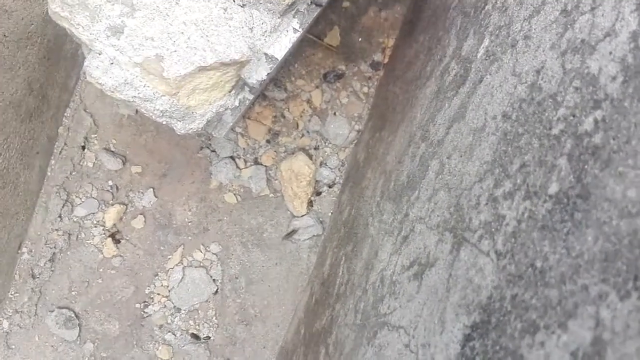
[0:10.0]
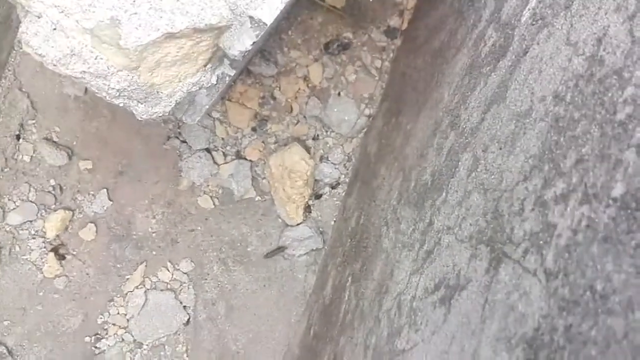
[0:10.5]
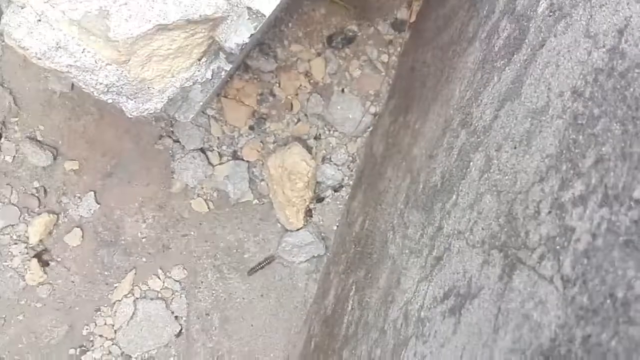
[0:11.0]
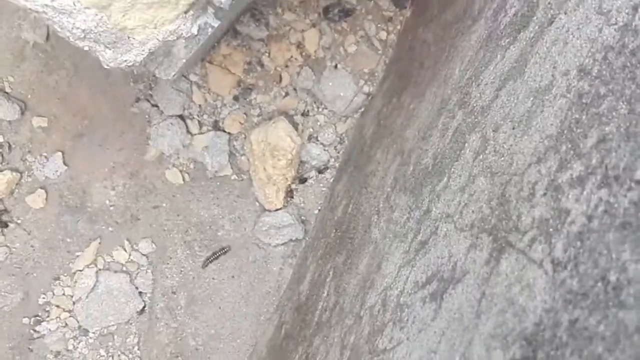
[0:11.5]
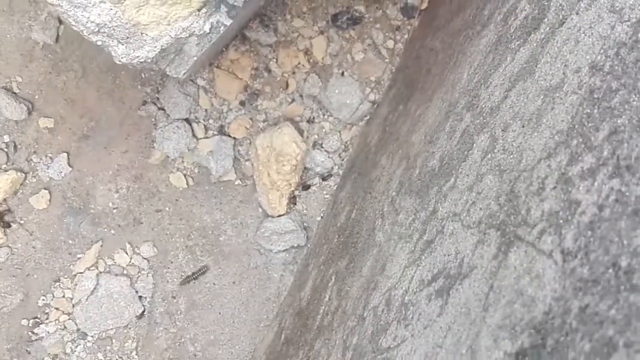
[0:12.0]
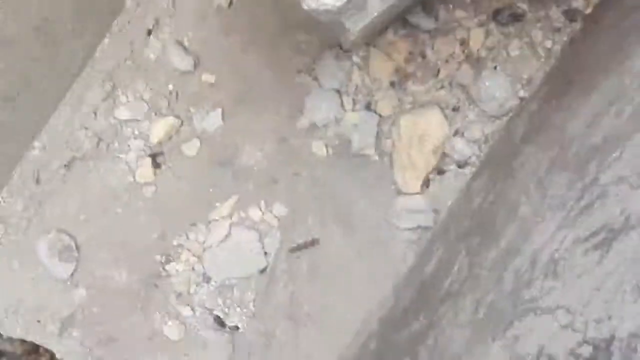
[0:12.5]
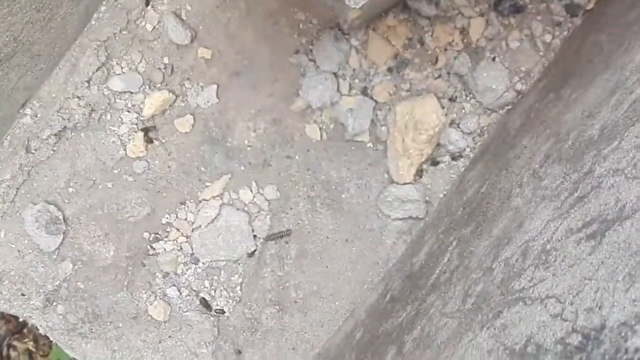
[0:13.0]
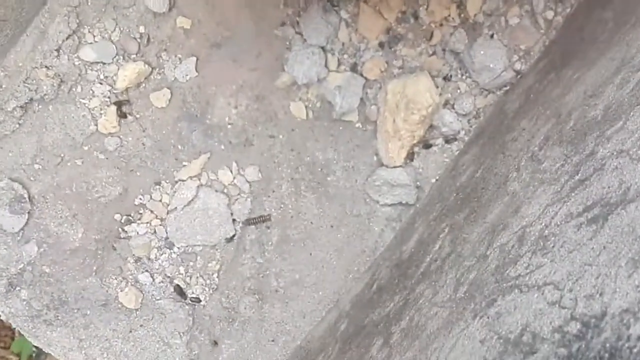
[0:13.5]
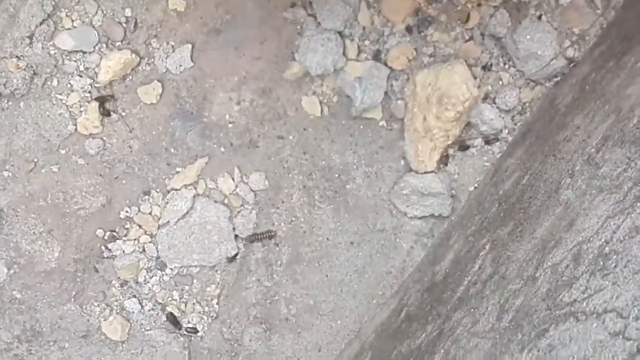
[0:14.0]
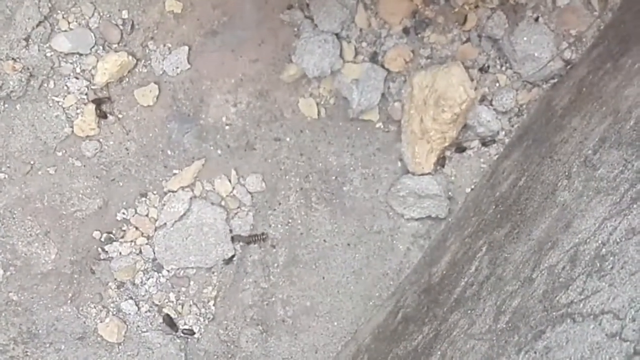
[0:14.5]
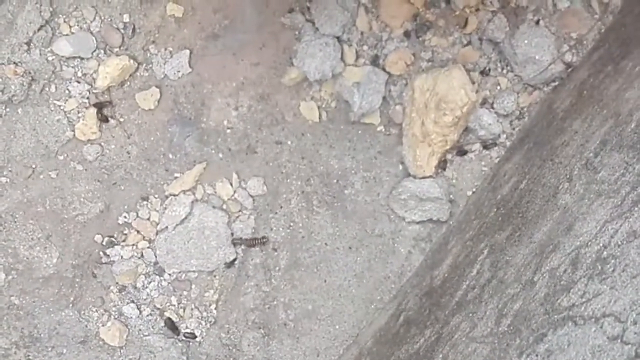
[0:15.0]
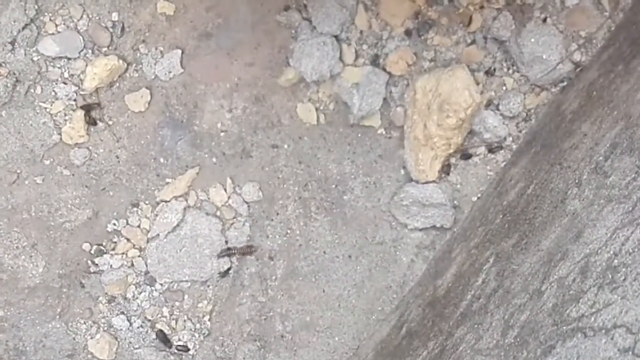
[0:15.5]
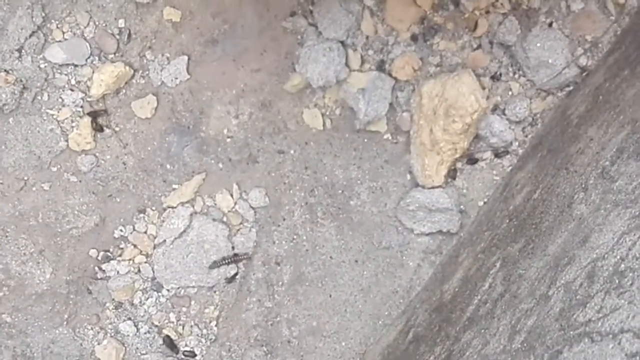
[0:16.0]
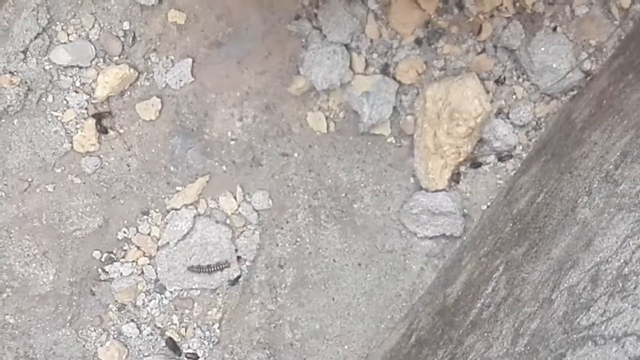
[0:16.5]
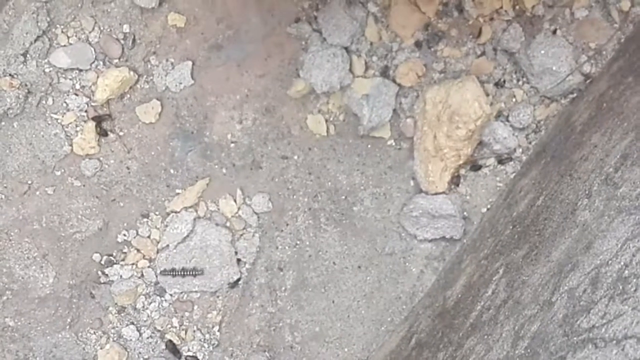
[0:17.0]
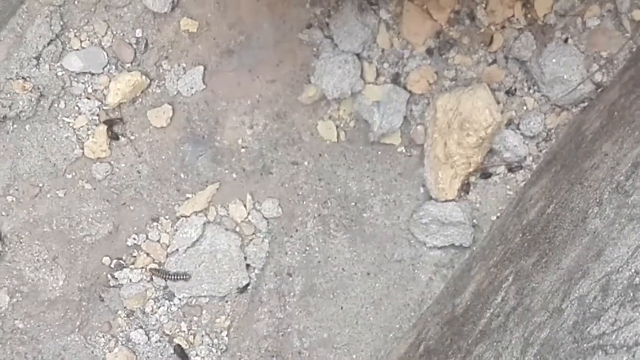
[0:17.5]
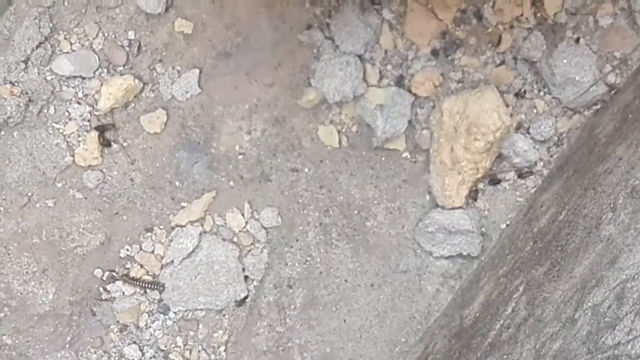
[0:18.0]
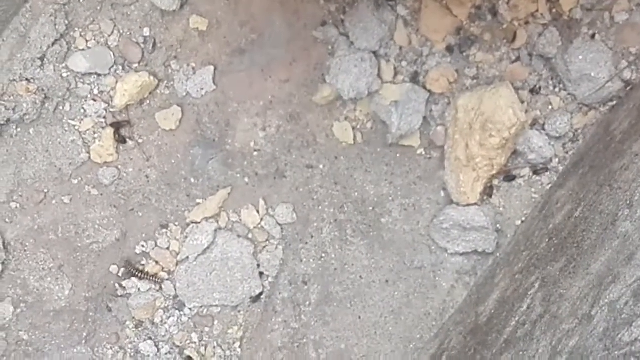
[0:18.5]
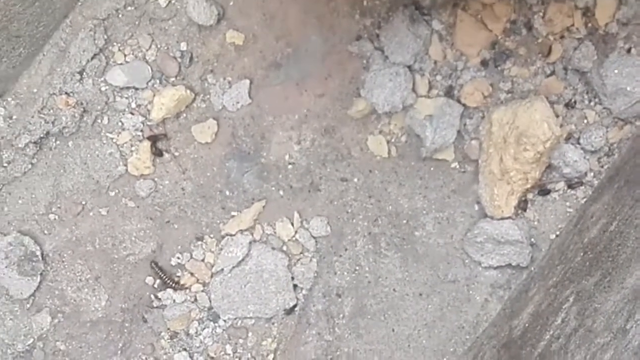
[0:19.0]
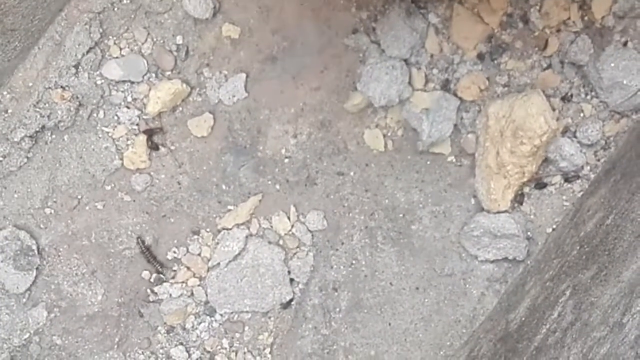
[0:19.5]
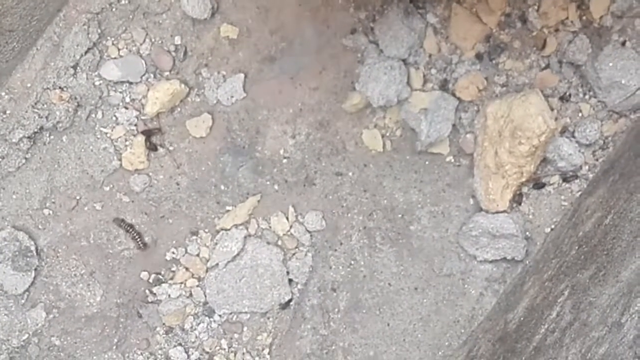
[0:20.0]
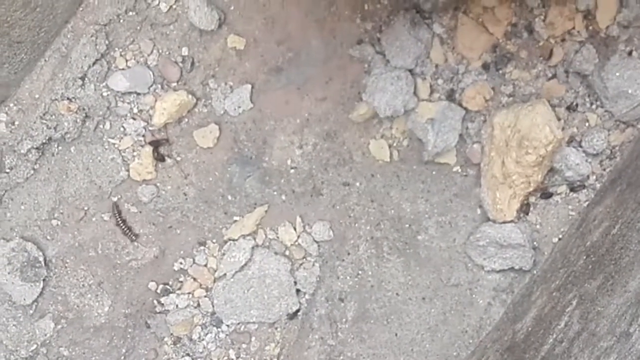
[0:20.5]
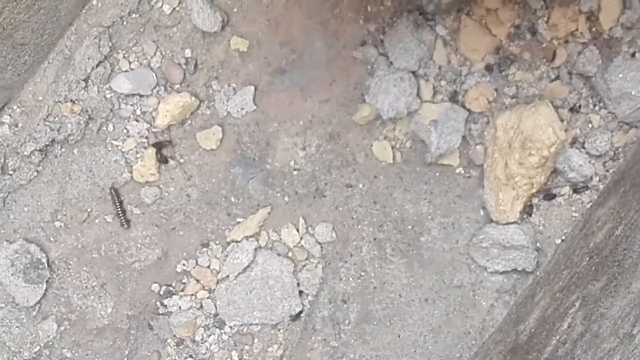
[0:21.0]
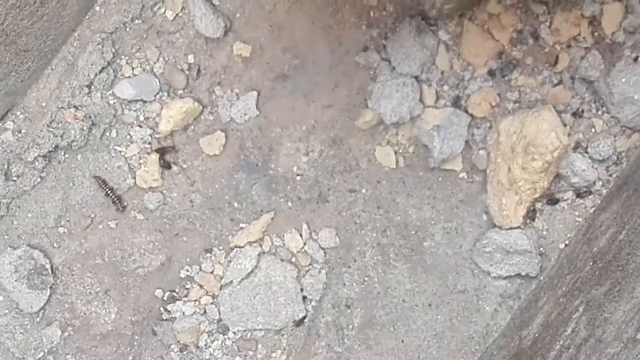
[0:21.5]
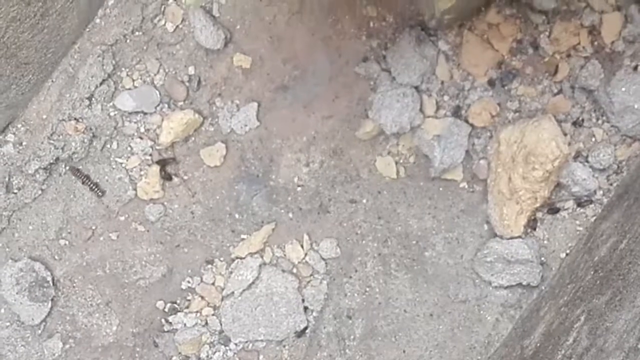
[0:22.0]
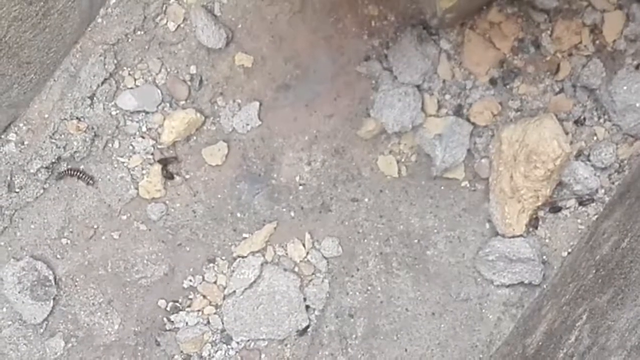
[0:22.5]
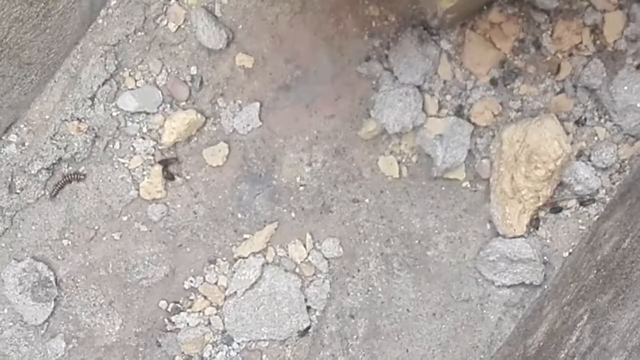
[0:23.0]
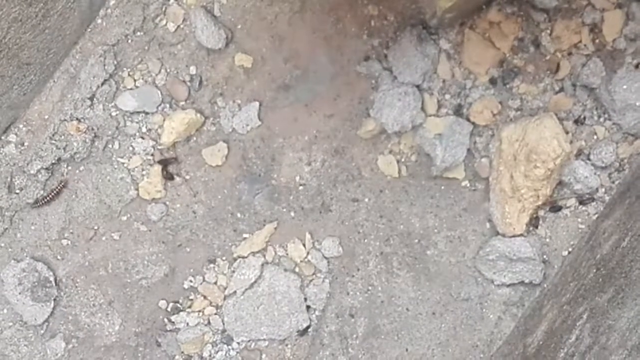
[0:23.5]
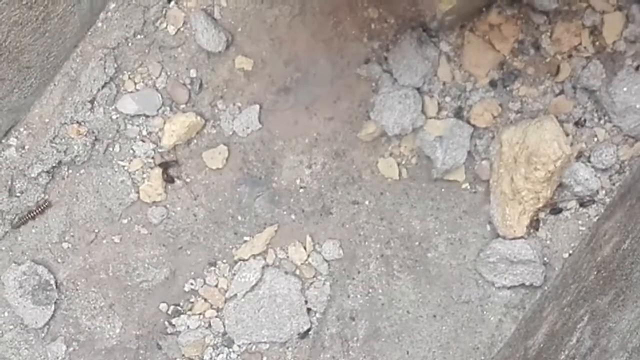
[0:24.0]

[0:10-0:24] The video keeps following the creature, and the person filming zooms in enough to show that it is like a millipede or a centipede. Its legs almost look like they are rippling as they move, apparently an effect of how the camera picks them up. The millipede or centipede looks brown or dark in colour and seems to be crawling over different rocks and parts of the landscape. It is not a quarry, but the debris resembles that kind of place: lots of rocks of different shapes and sizes. The video stops with the millipede still in frame.